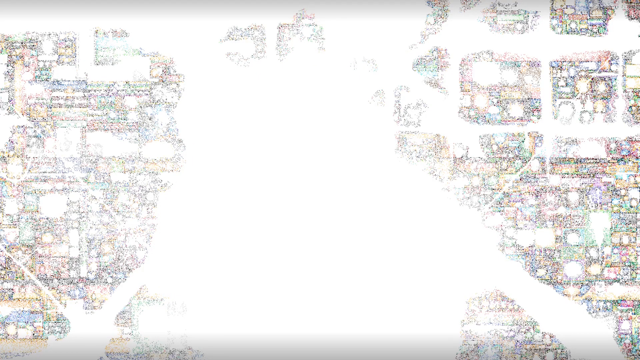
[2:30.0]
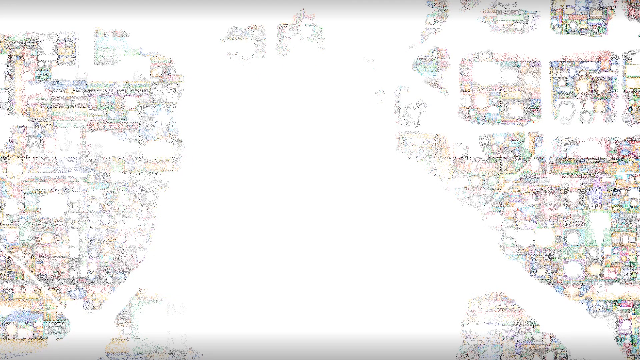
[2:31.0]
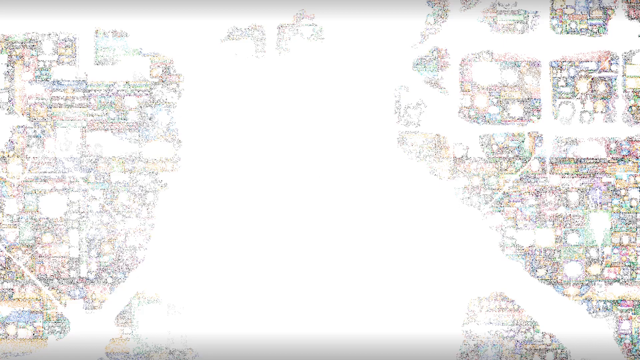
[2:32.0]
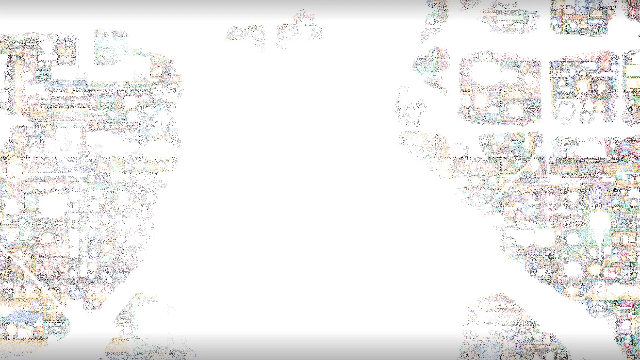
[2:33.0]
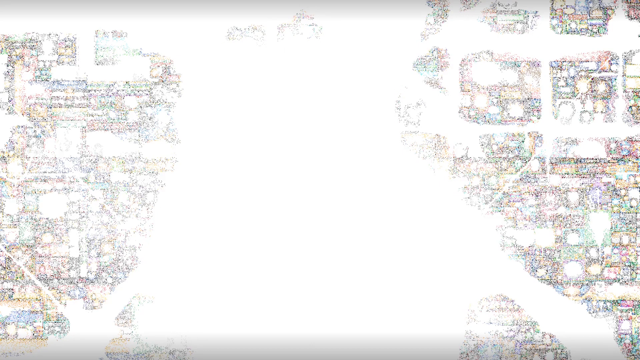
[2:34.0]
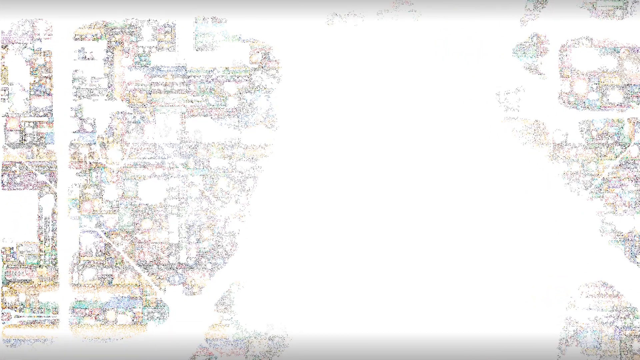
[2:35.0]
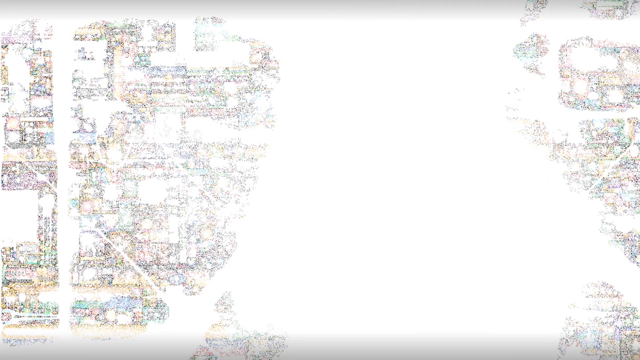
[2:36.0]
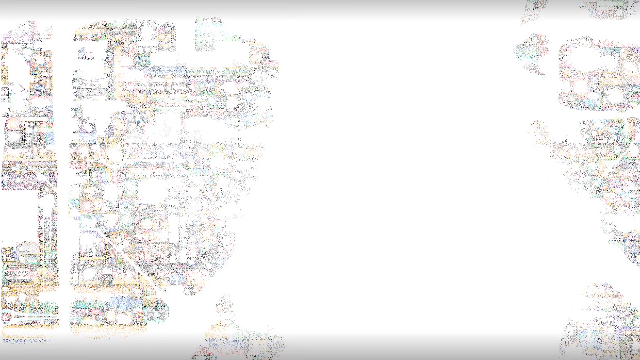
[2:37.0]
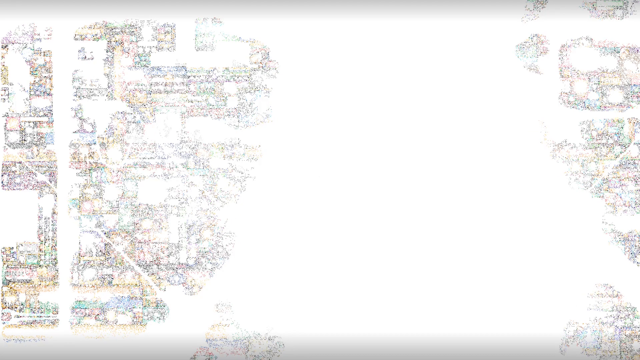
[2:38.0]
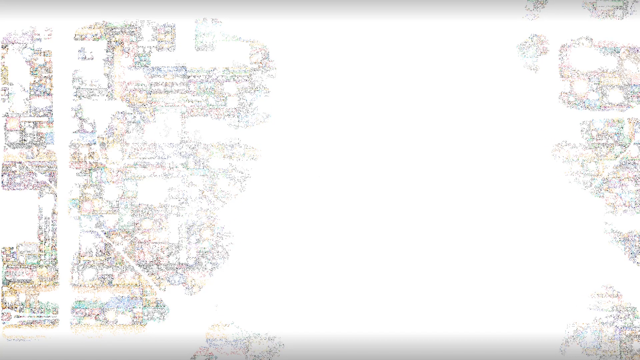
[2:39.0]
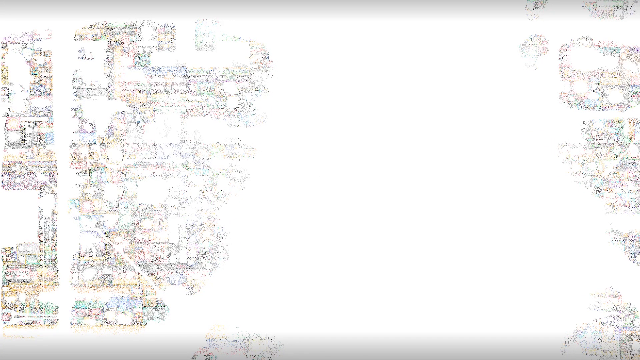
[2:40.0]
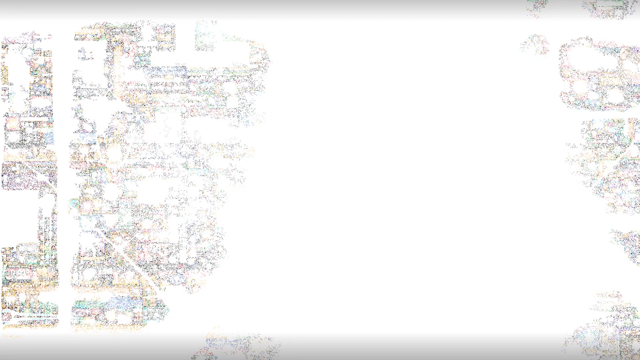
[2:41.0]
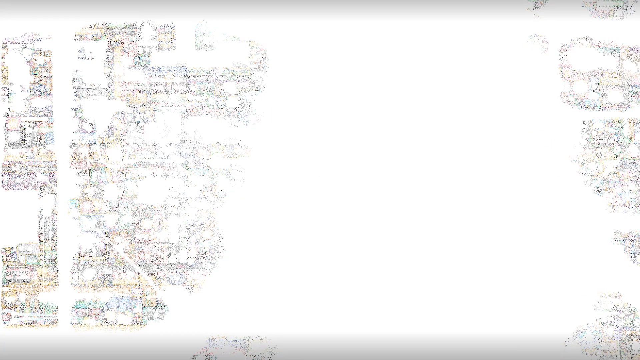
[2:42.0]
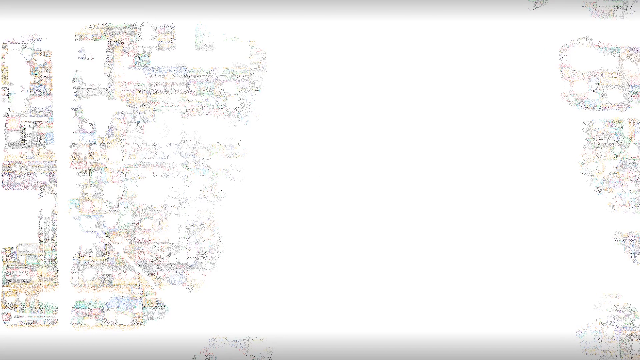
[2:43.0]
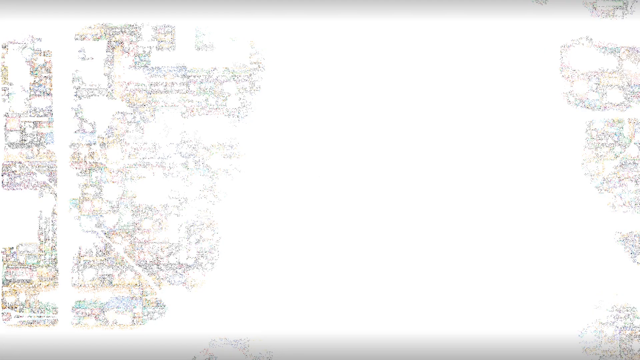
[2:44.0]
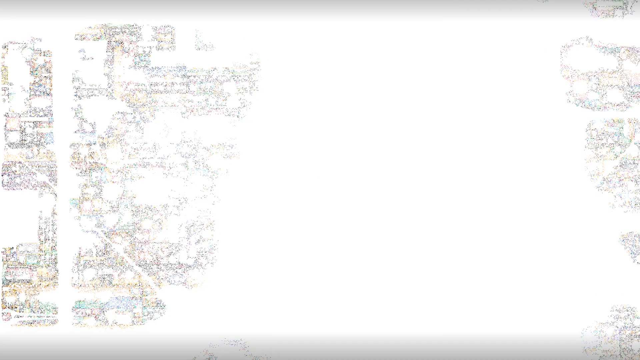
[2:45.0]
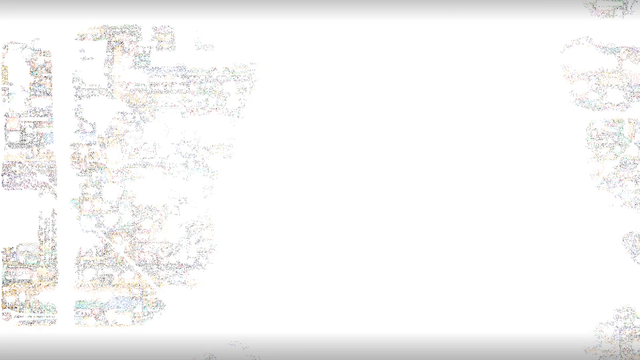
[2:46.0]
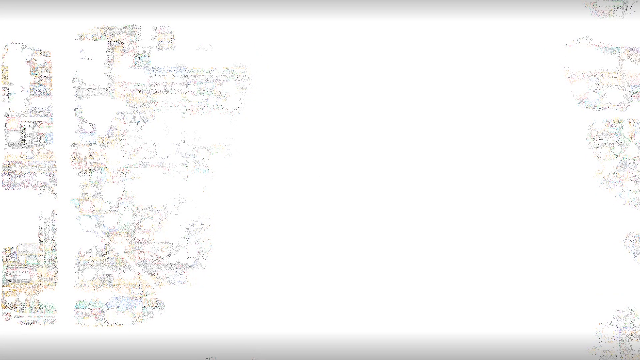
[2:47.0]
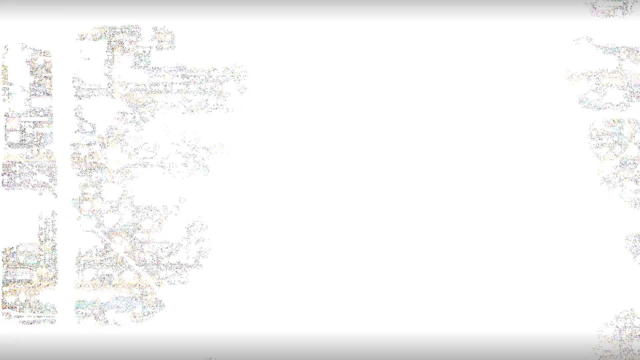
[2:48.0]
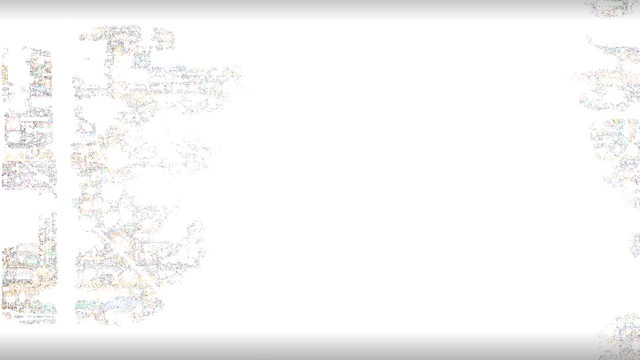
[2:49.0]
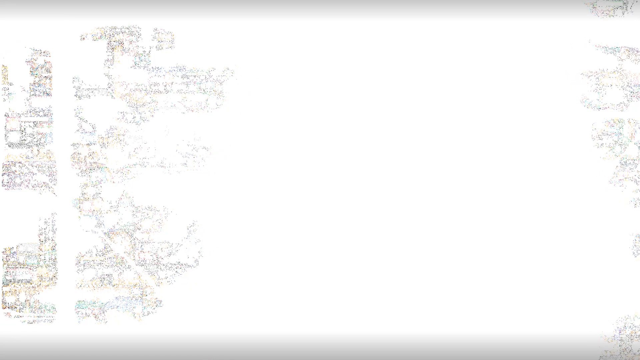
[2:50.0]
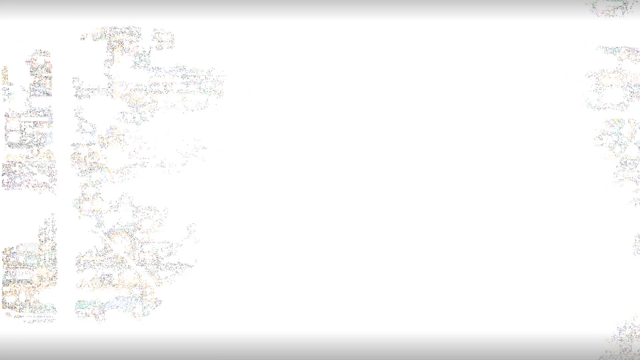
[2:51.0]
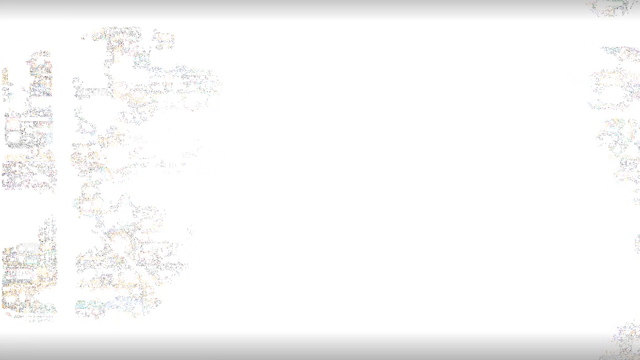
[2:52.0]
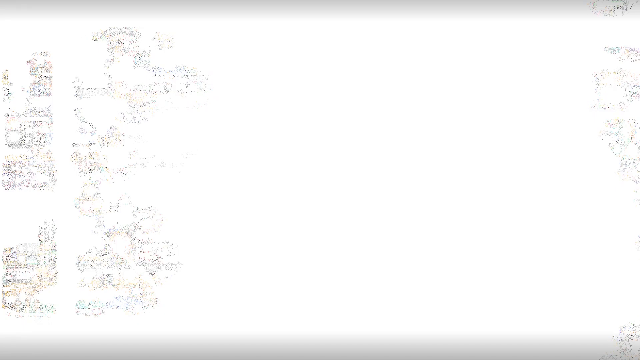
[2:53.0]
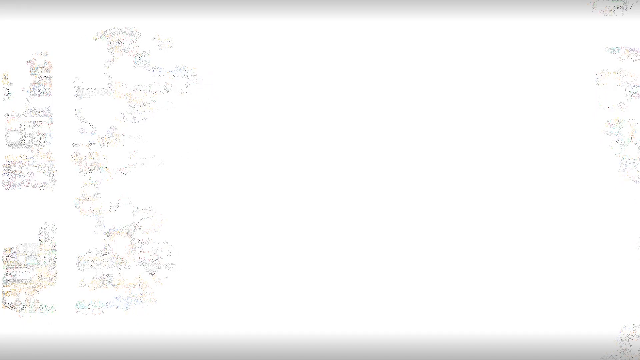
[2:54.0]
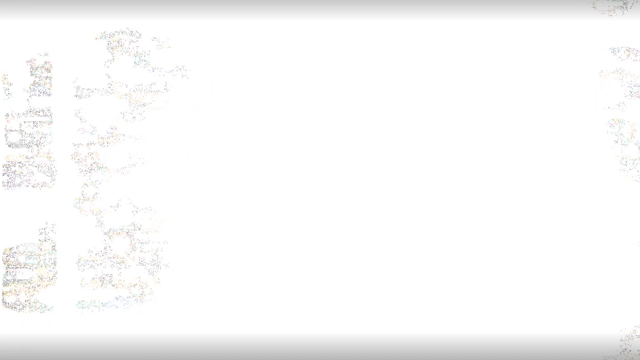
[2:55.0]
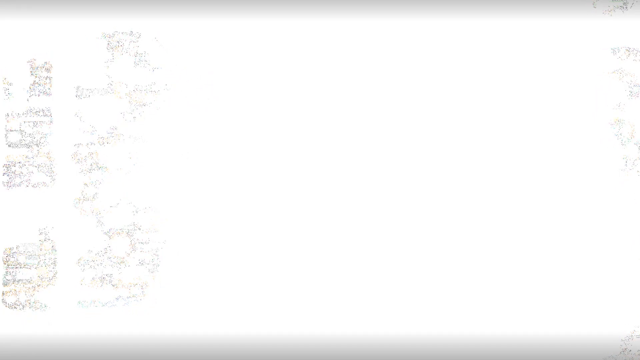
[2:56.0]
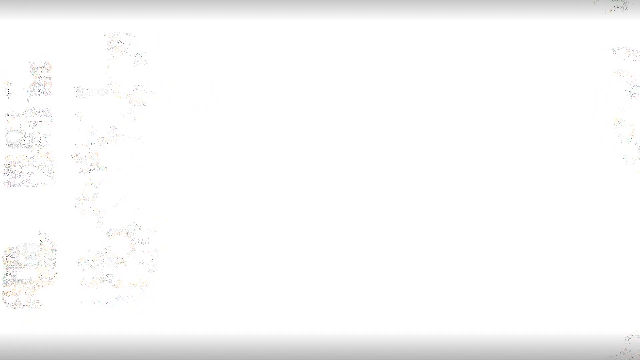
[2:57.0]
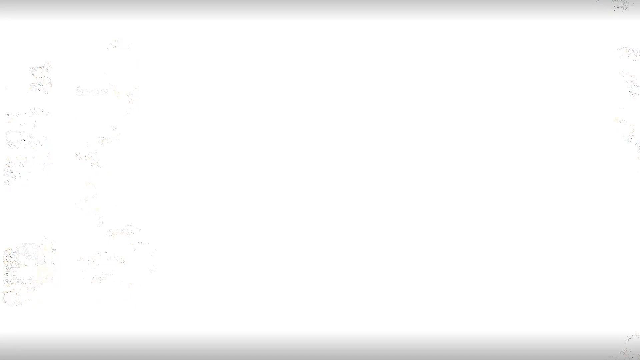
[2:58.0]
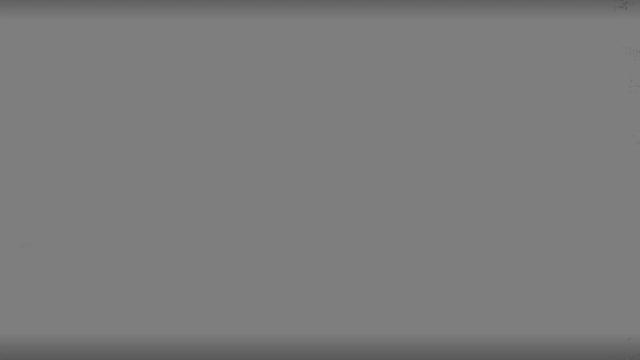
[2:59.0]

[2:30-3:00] Everything is a white mess, most of it disintegrating. The screen moves slightly, revealing a square hole on the left side. Most of it slowly disintegrates into a big white area, leaving little speckles, until it is all gone. The pixelated art apparently summarizes many subreddits combined. Other items in the art include the Boston Bruins, a rock star with a mustache and long hair, Gordon Ramsay, a trident, the letters "OF", a rubber ducky and a urinal.